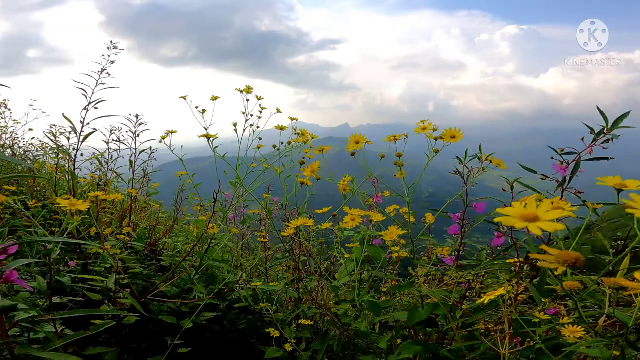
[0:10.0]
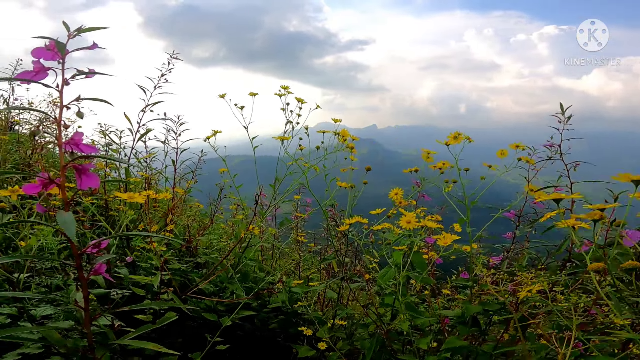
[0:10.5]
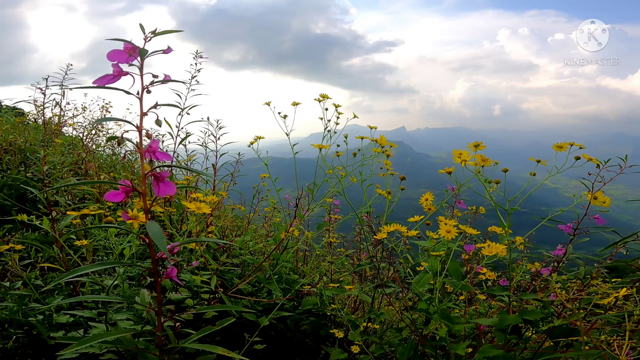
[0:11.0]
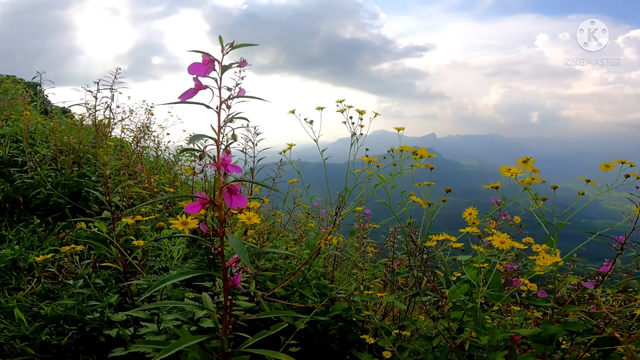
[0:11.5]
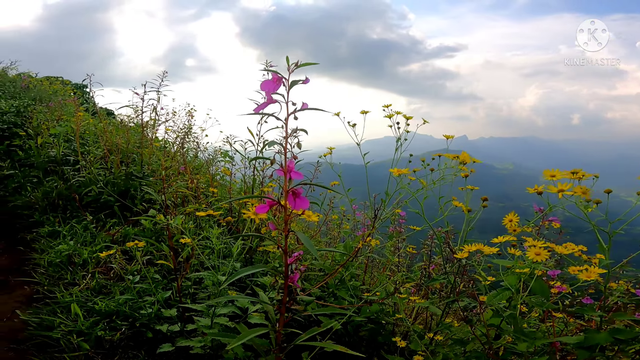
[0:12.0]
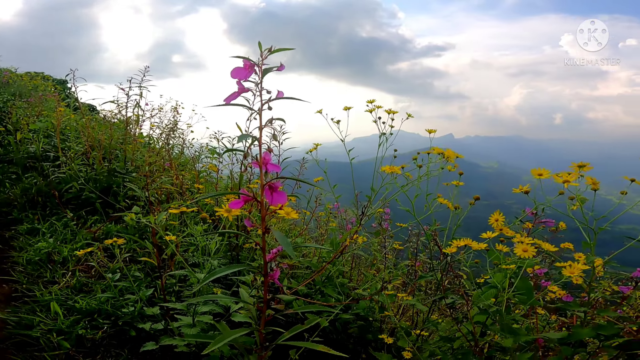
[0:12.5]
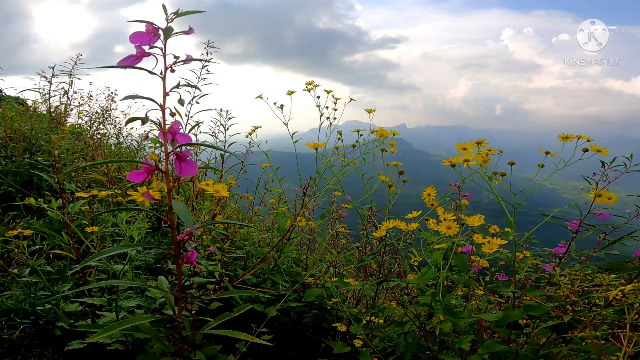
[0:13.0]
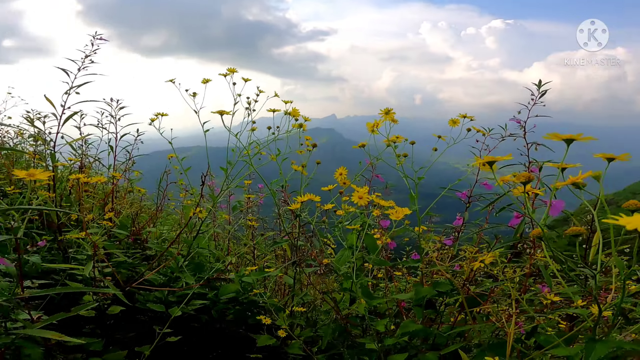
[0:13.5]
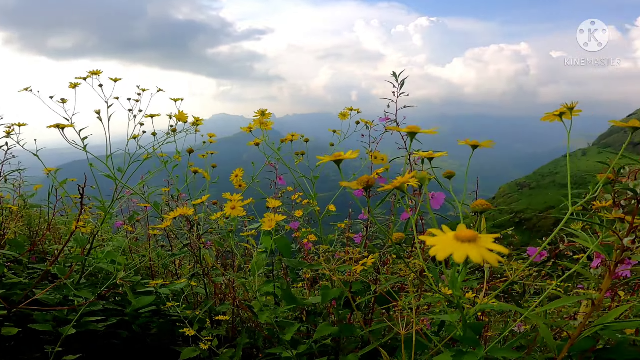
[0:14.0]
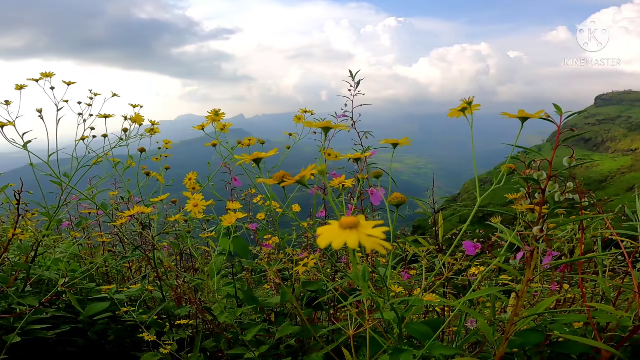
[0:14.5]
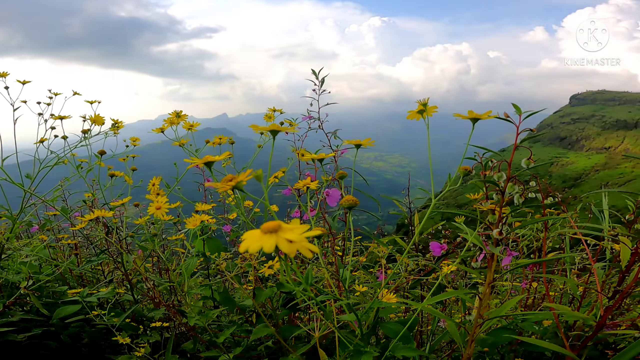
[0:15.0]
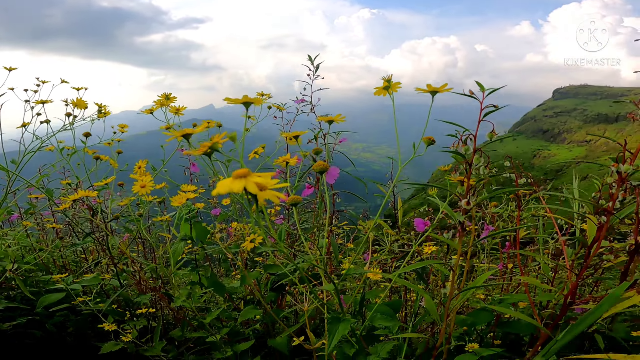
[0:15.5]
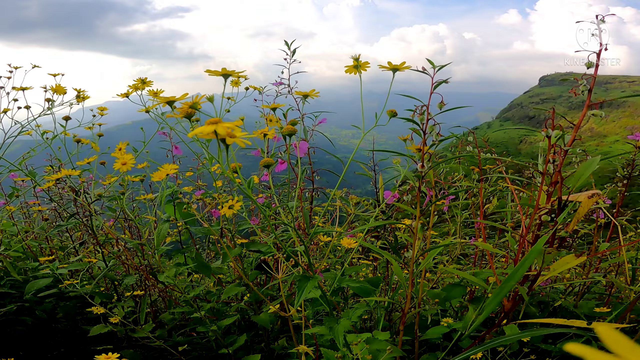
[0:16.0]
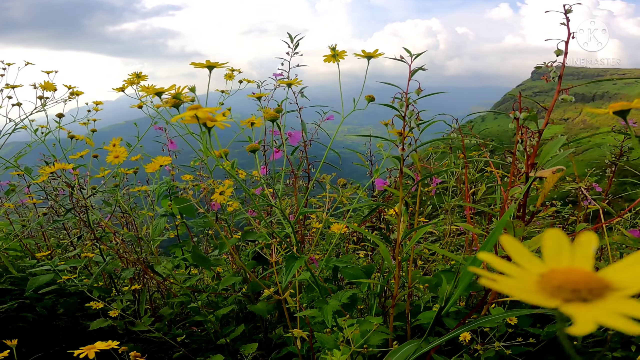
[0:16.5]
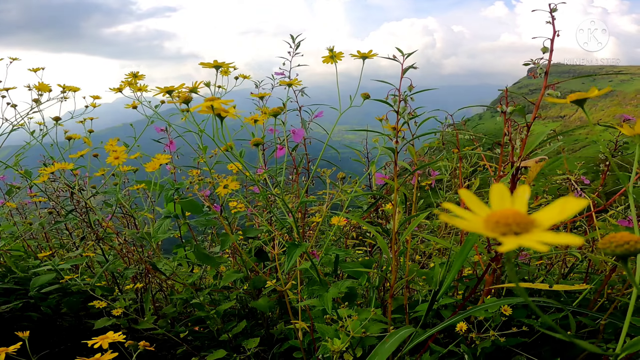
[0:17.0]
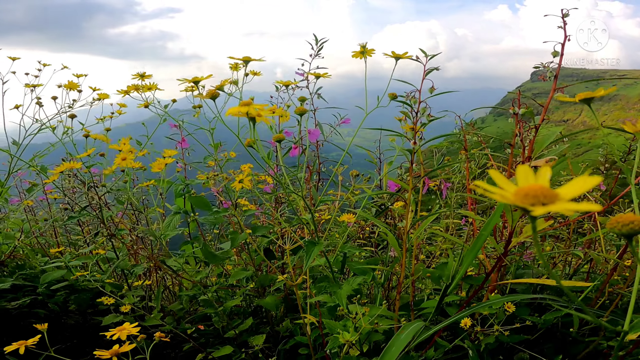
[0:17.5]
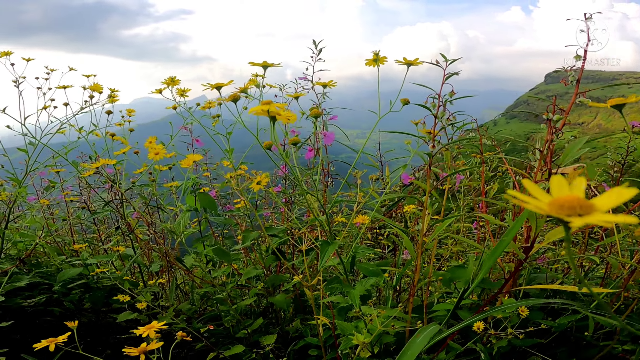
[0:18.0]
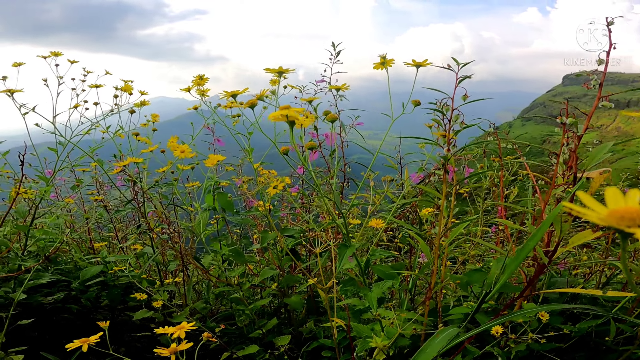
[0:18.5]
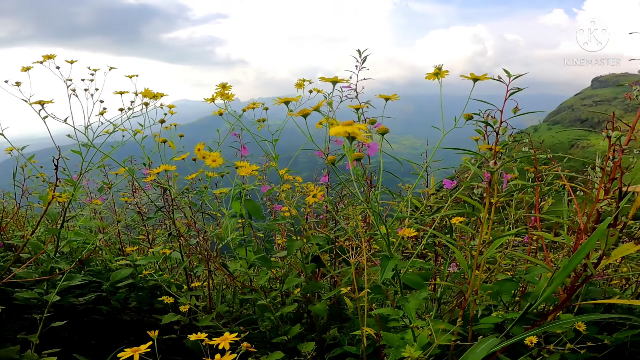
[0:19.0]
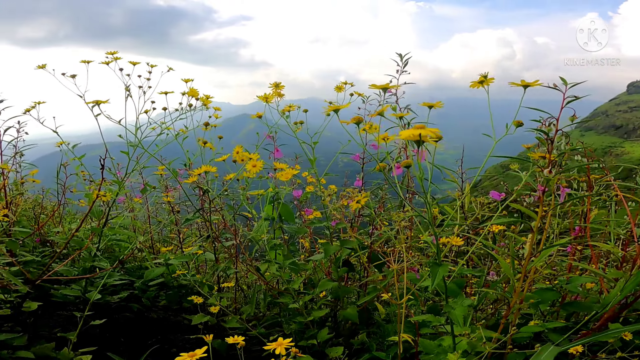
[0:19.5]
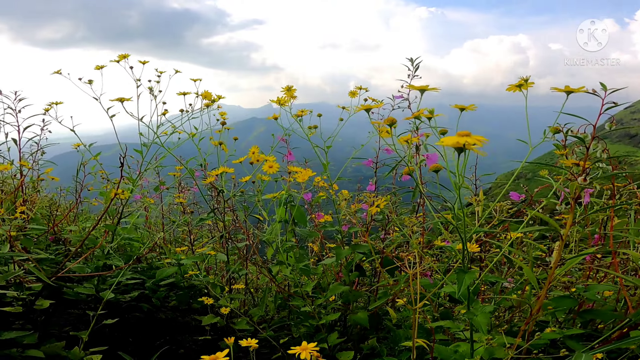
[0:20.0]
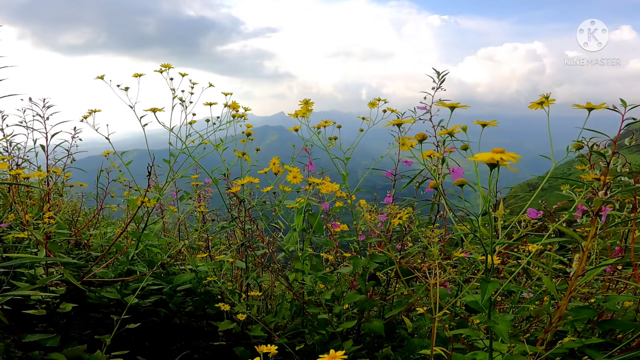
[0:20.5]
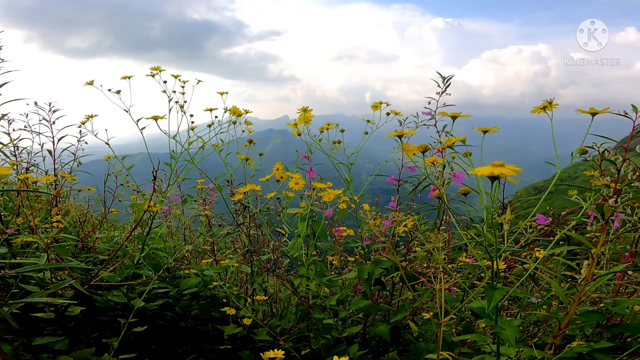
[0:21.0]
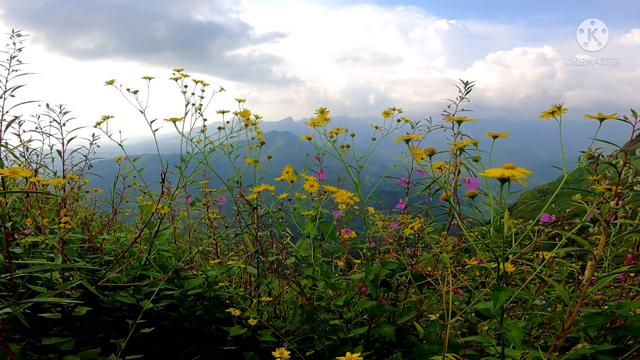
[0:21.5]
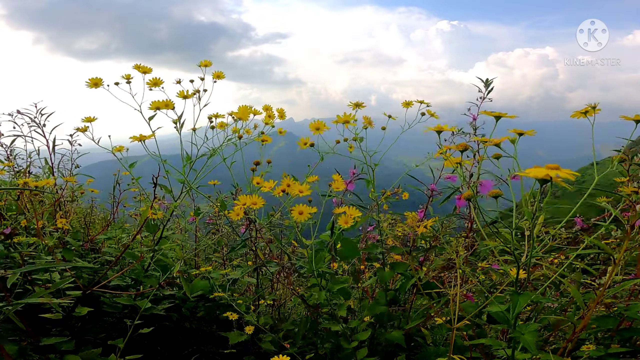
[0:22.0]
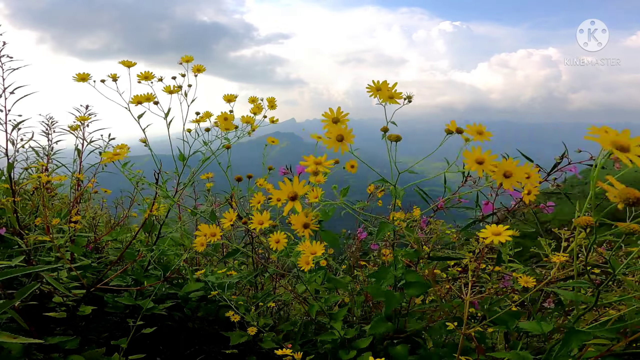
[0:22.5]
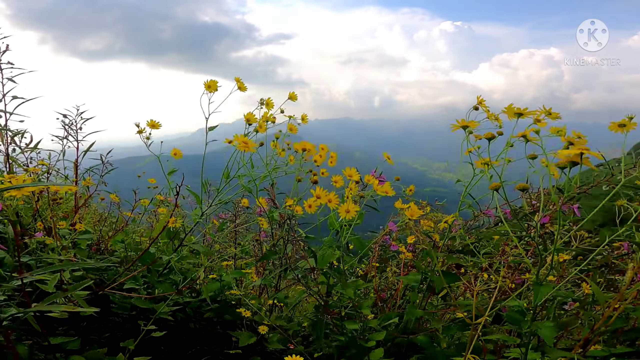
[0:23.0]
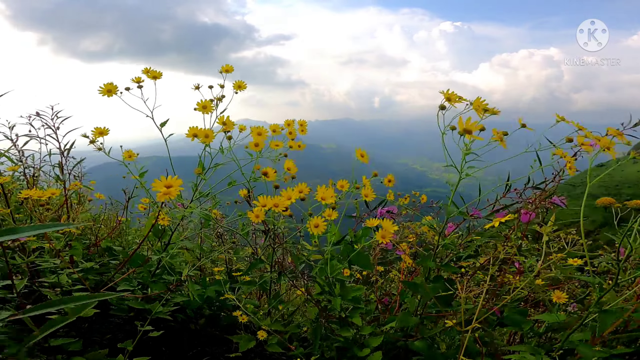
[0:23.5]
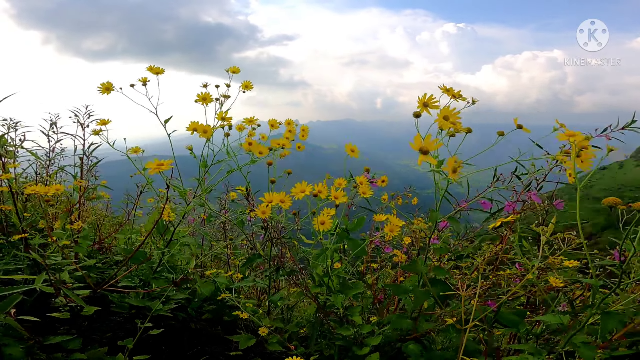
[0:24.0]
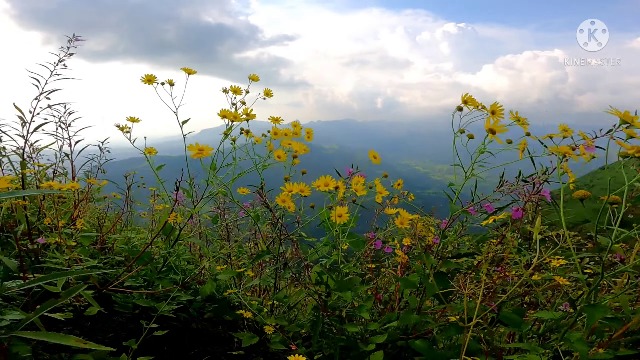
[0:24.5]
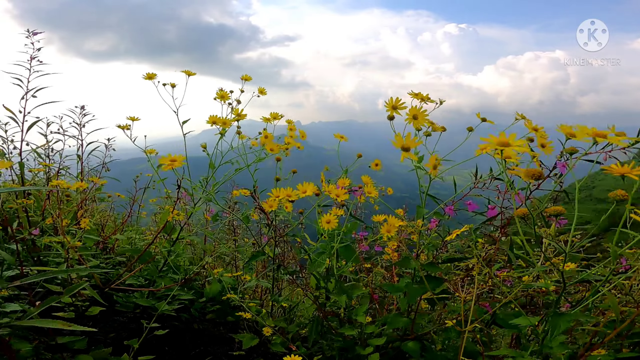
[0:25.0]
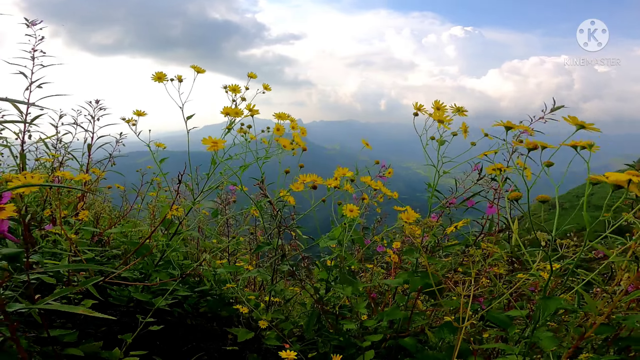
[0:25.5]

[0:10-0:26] A close-up shows sunflowers with some purple flowers thrown in, in the middle of a windstorm, on a mountainside full of sunflowers, purple flowers and weeds. The mountainsides in the background are covered in an enormous amount of greenery, and the sky is full of clouds, so there appears to be a storm somewhere in the distance. The wind churns up the sunflowers, in a windstorm that is probably leading up to rain. There is lots of greenery all around the image.